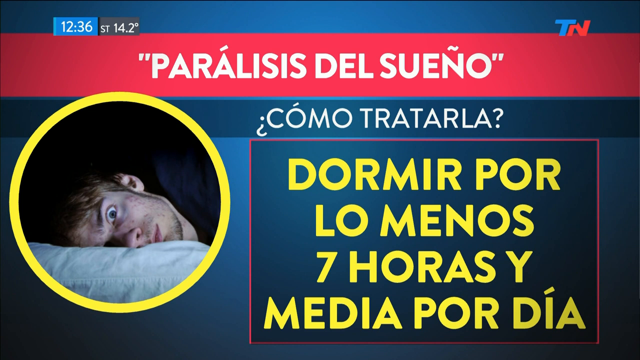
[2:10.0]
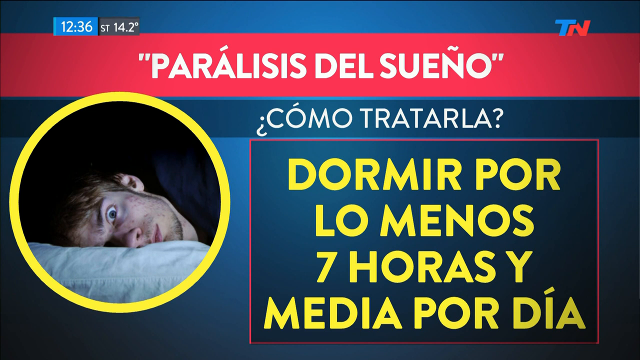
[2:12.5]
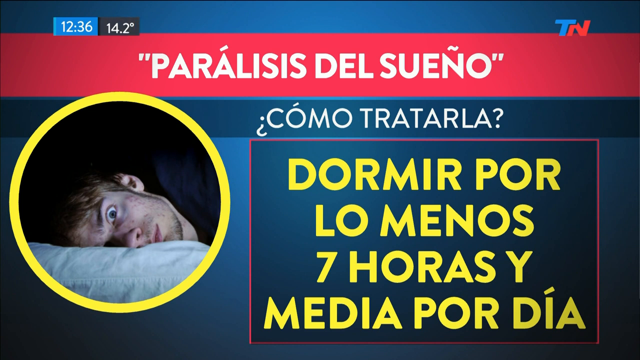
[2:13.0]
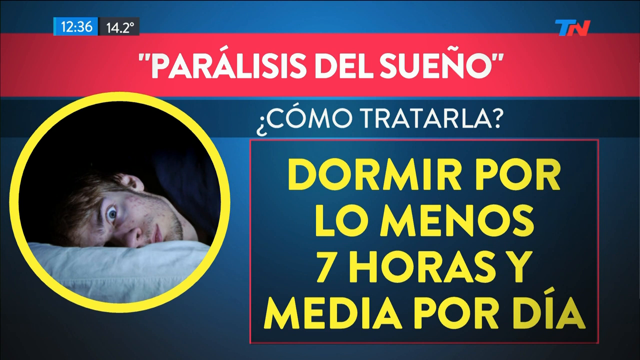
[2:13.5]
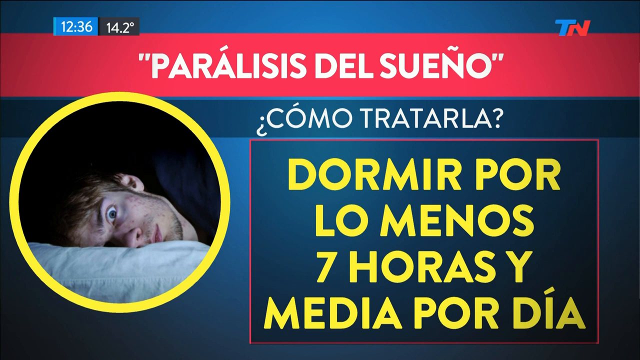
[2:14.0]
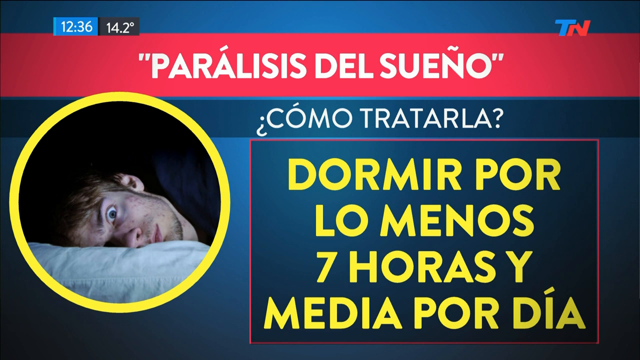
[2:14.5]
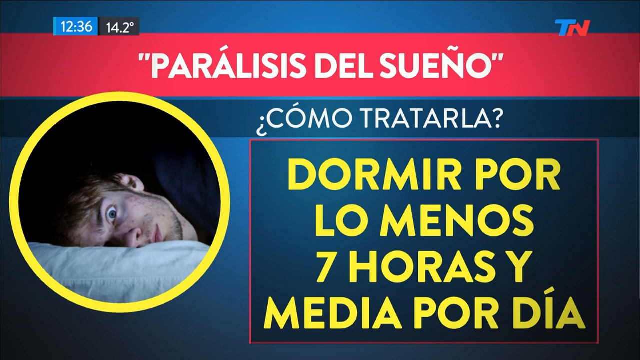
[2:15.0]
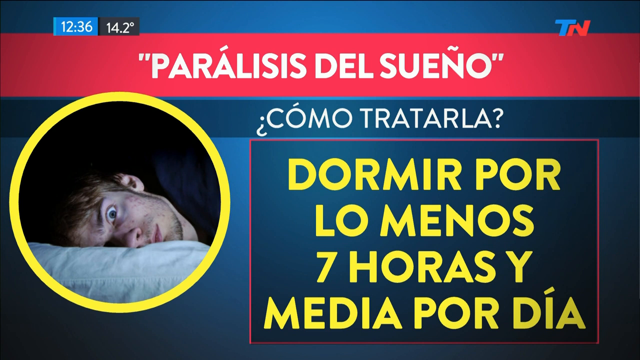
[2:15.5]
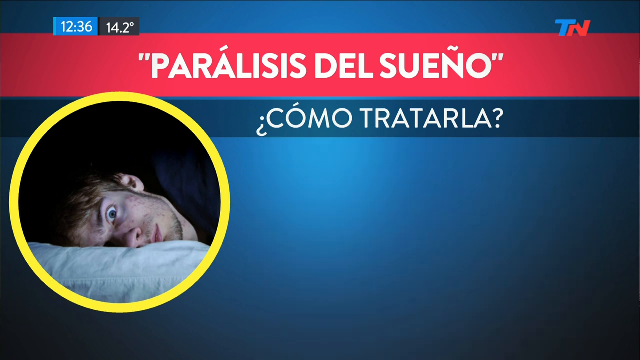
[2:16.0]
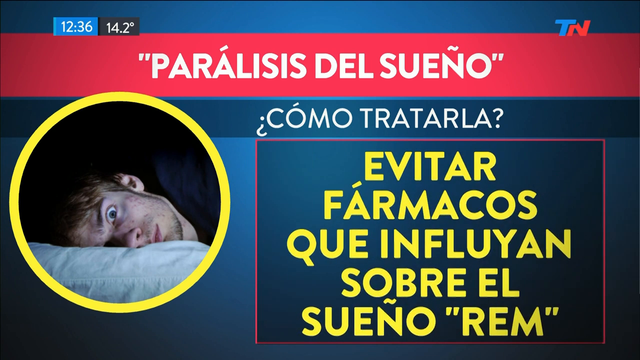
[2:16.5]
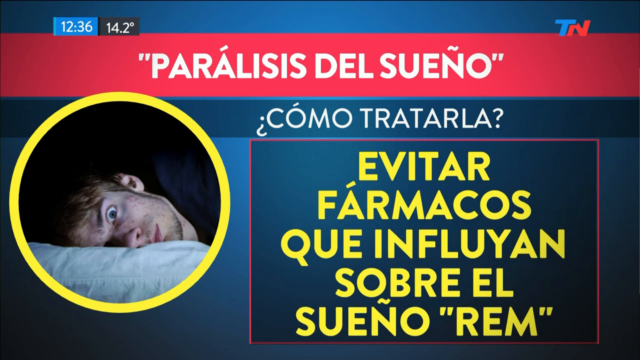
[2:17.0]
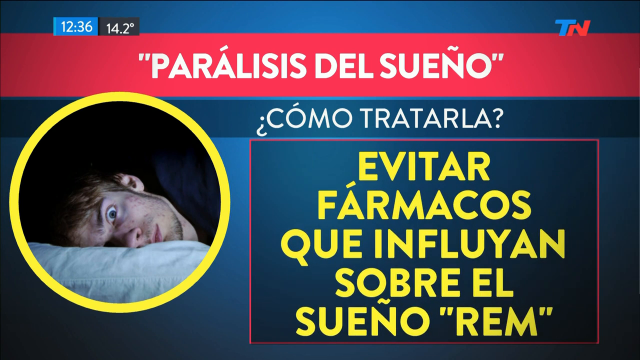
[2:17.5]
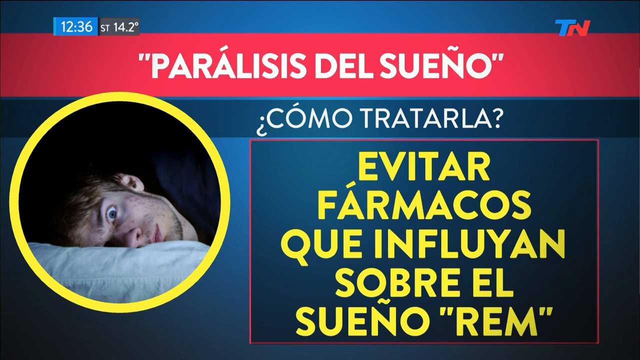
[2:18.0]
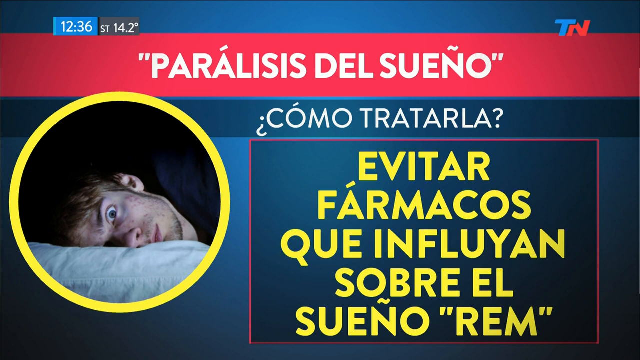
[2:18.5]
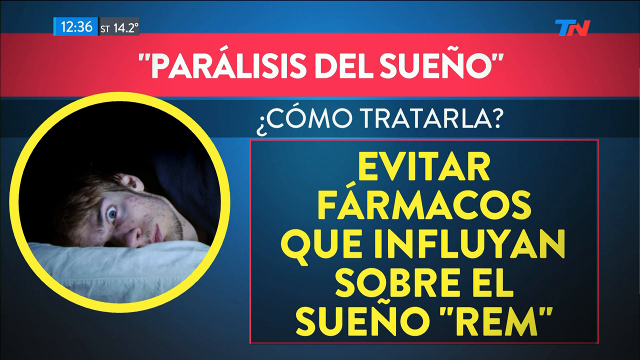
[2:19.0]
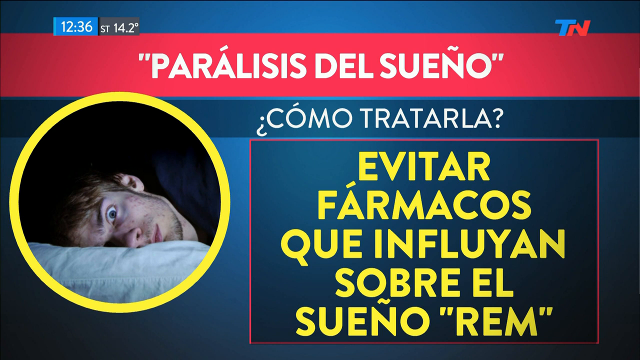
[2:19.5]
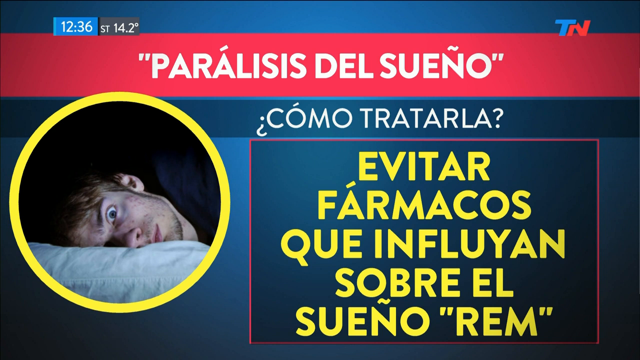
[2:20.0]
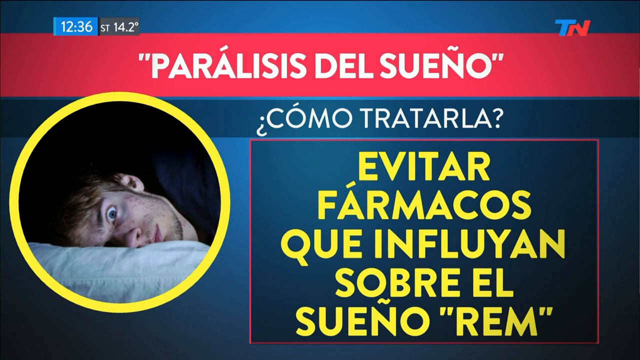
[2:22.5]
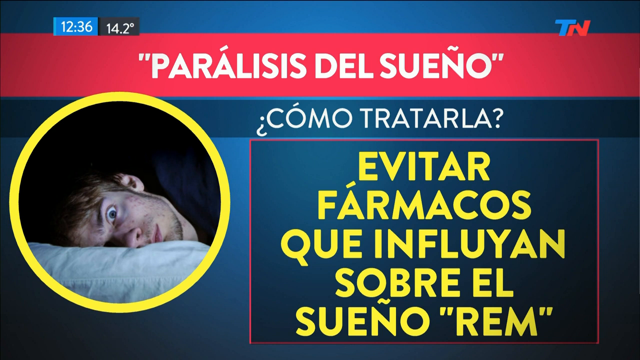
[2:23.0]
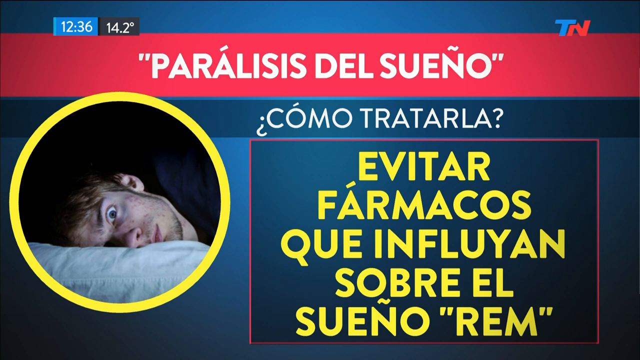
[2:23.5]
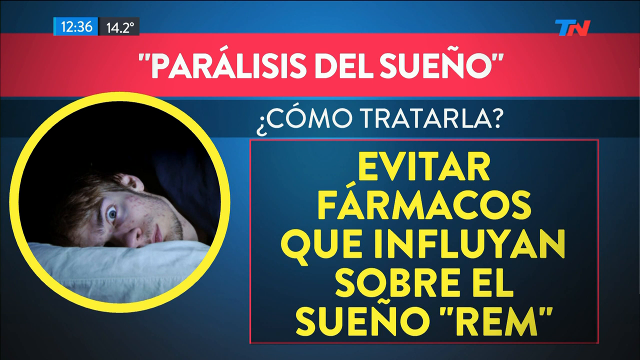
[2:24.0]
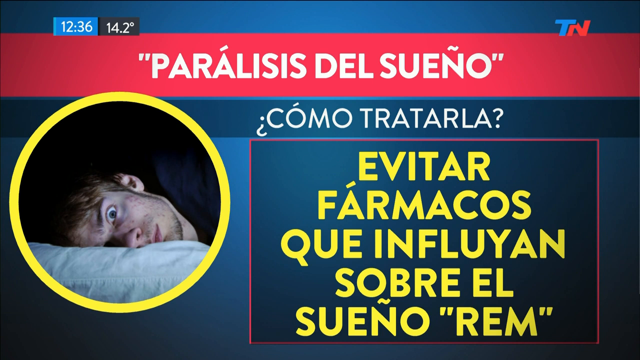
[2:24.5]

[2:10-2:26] The person's face is still shown against a blue background, with paralysis written in red. Text descriptions seem to explain what sleep paralysis is and how it could be prevented and handled.